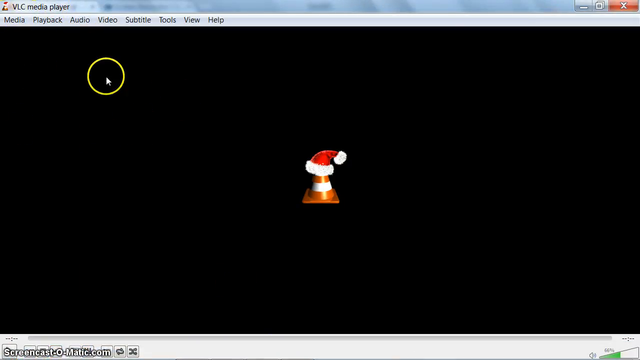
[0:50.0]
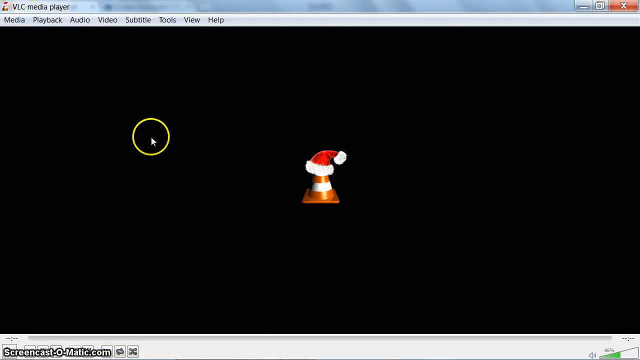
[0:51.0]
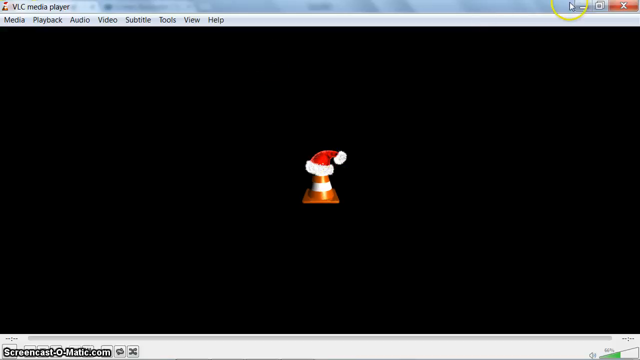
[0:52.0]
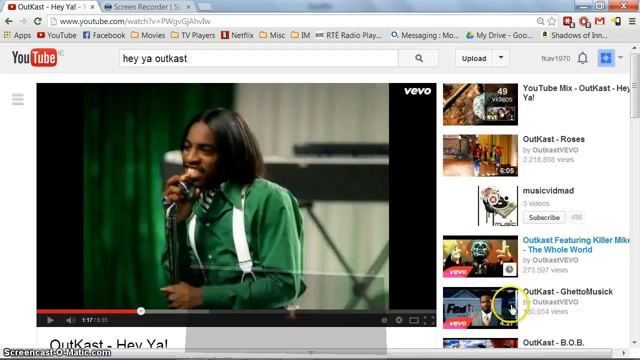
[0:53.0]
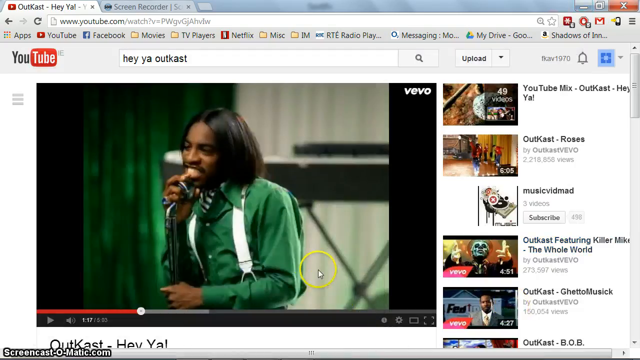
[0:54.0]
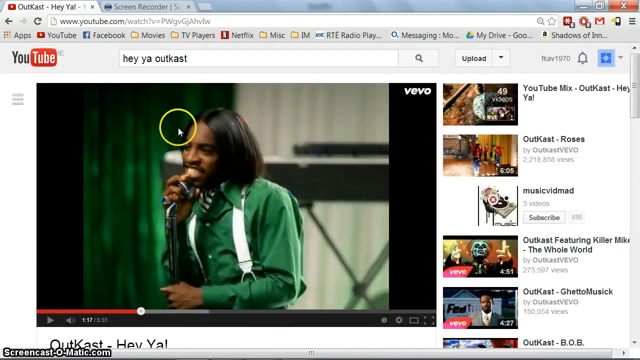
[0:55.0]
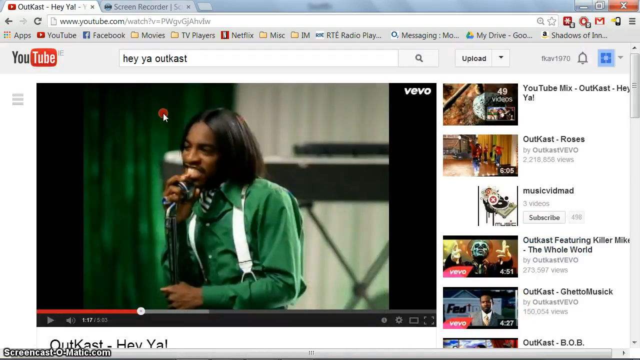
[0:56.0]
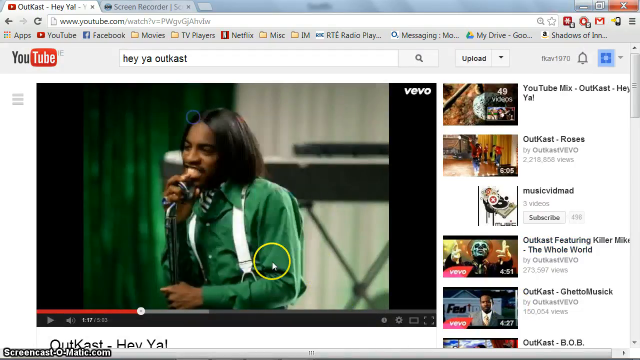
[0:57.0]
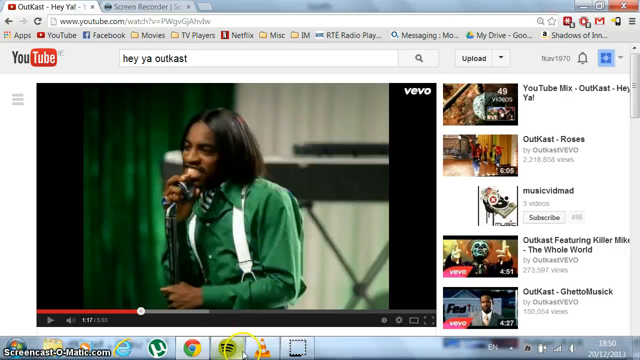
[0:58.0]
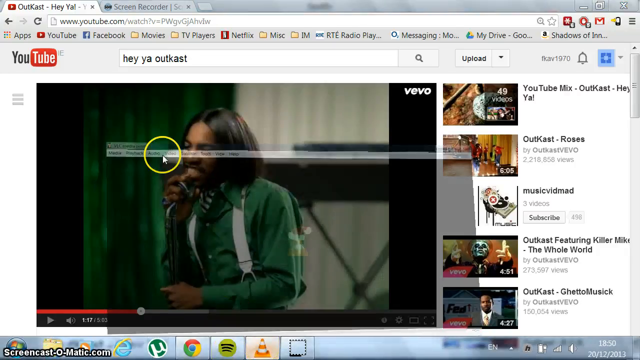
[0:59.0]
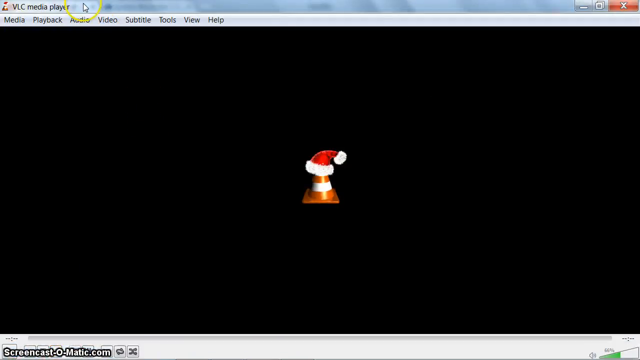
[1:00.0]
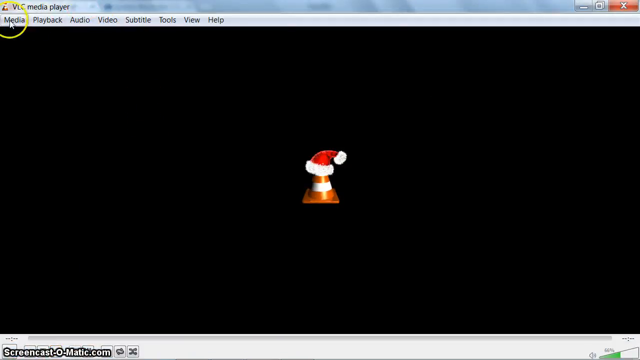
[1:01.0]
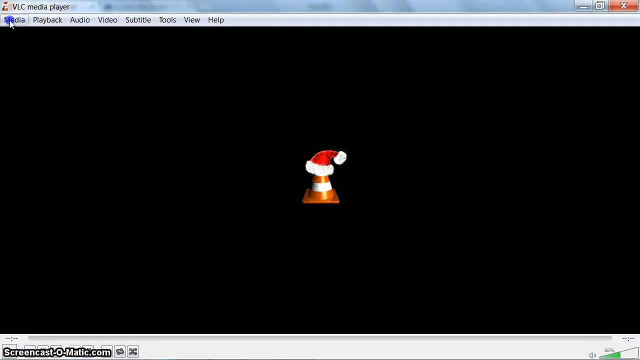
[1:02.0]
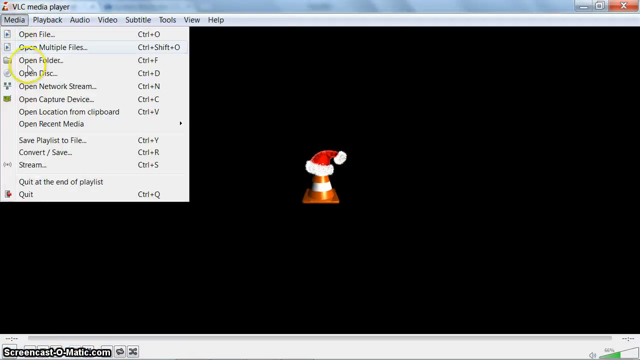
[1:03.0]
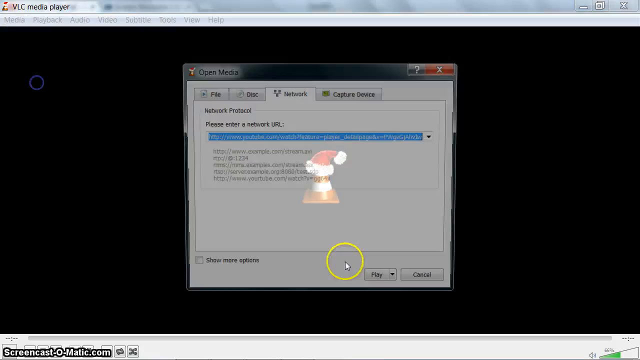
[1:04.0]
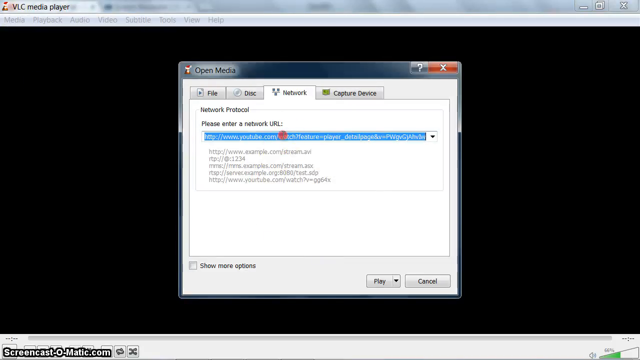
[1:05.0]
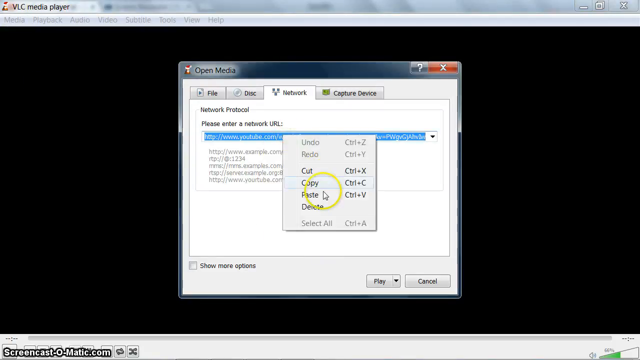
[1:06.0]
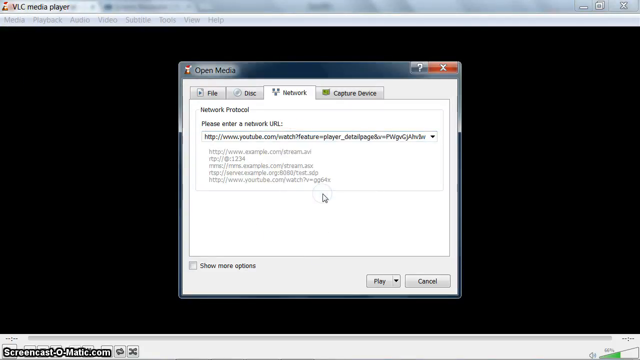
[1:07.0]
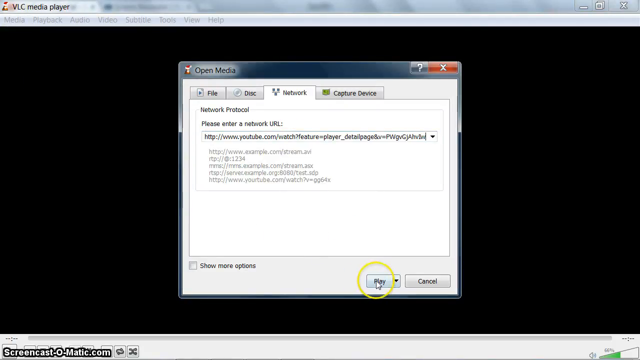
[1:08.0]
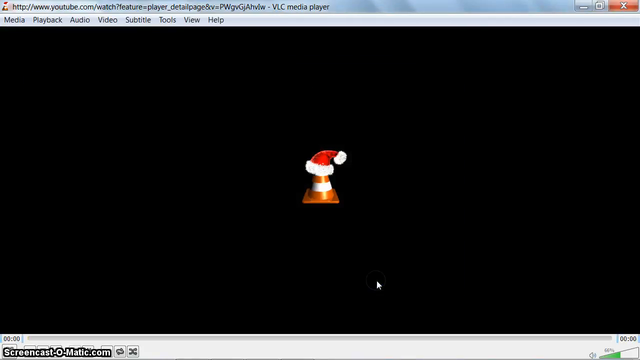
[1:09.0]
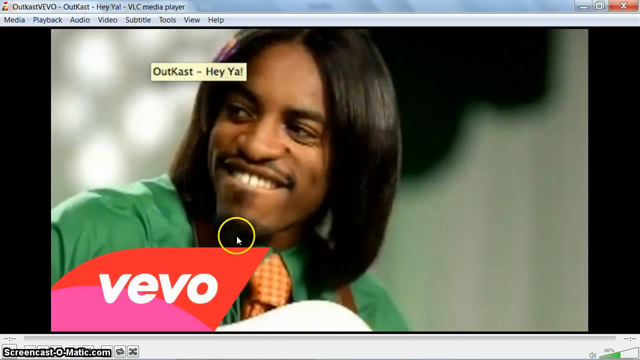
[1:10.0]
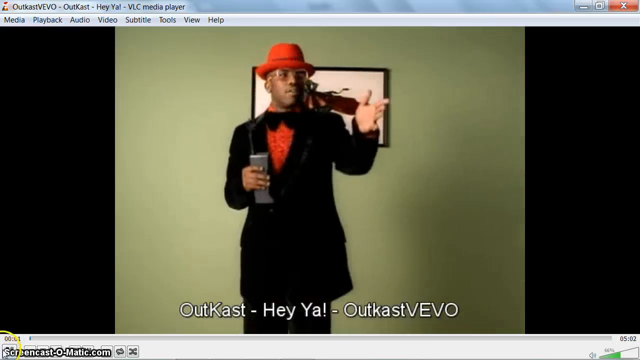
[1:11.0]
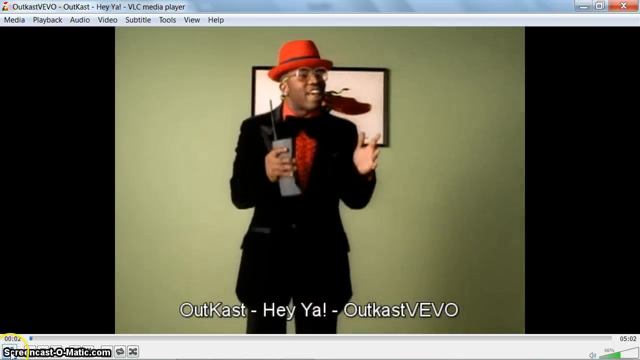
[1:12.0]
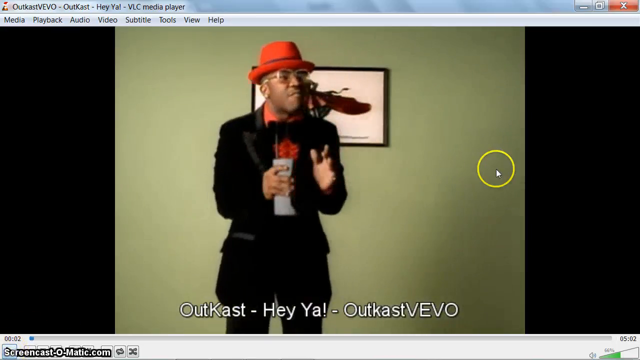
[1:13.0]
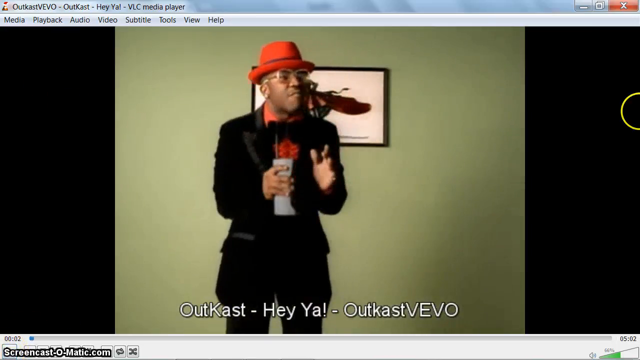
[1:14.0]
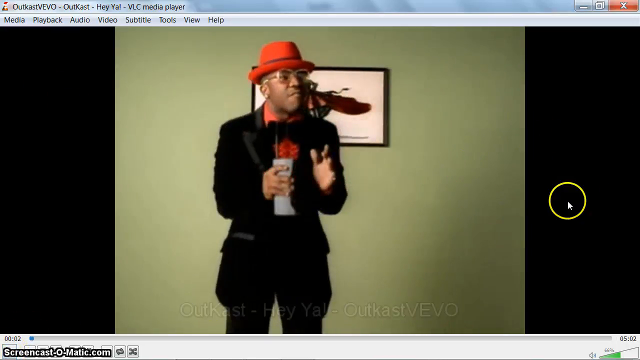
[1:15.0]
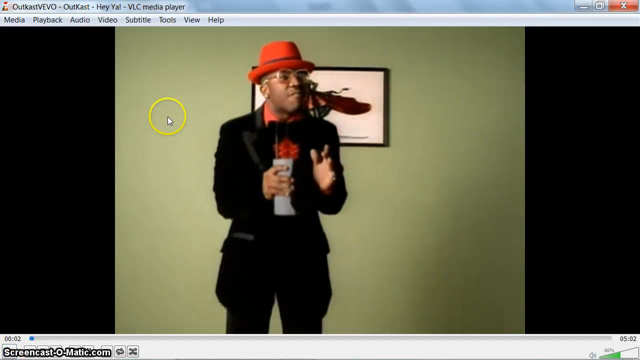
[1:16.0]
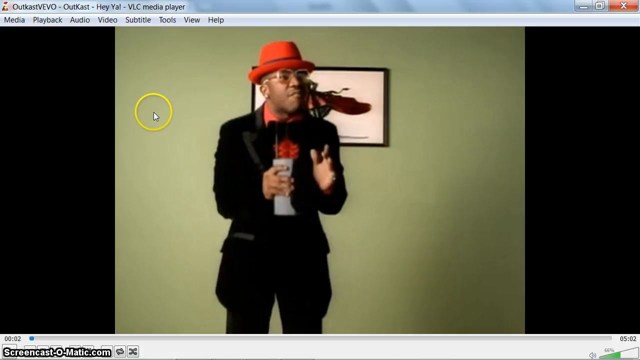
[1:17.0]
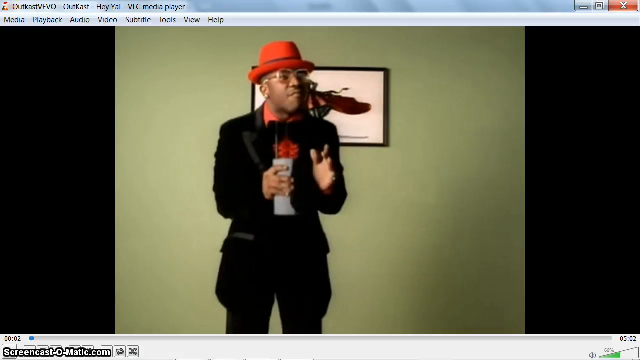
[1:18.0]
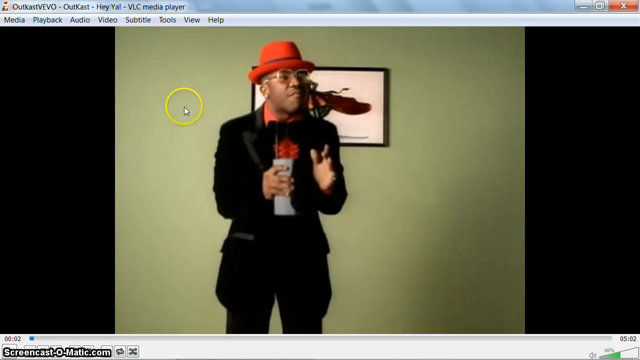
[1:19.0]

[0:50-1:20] The VLC media player application is open on the computer desktop. The player screen is black except for an orange traffic cone clip art in the center with a Santa Claus hat on its very top. The circle cursor circles around the traffic cone, then goes back over to the YouTube video, right-clicks, and selects the copy URL option on the pop-up that appears on the YouTube page. The cursor returns to the VLC media player, clicks the media tab at the top and then open network protocol, and pastes the YouTube video's web address where it says "please enter a network URL". The OutKast video then plays within the VLC media player, immediately flipping to one of the first scenes, showing a gentleman in a black tuxedo with a red undershirt and ruffles, wearing a red hat.